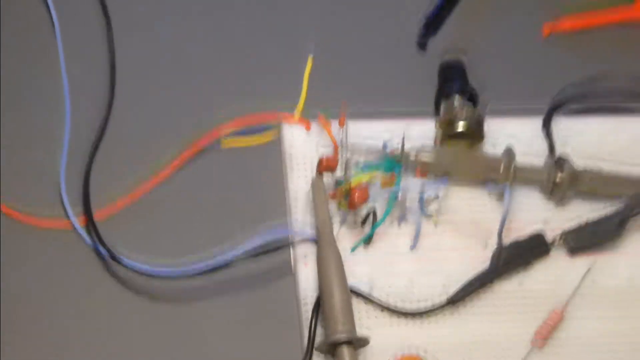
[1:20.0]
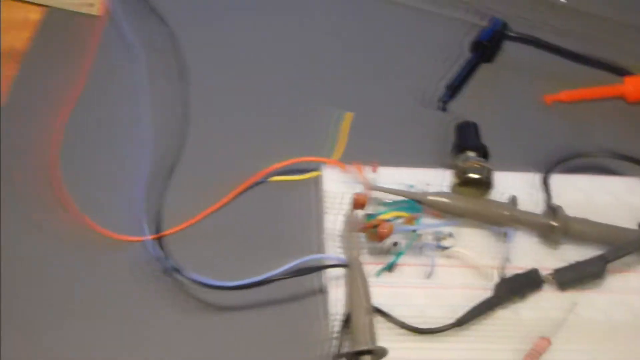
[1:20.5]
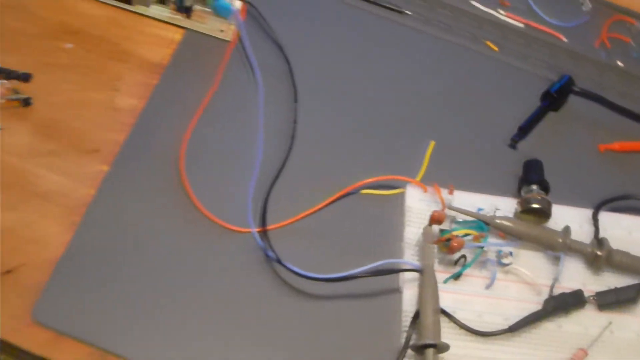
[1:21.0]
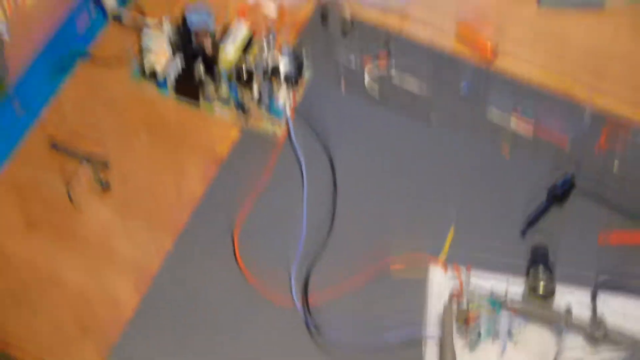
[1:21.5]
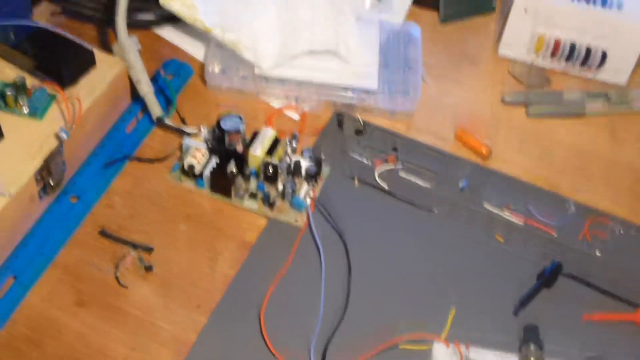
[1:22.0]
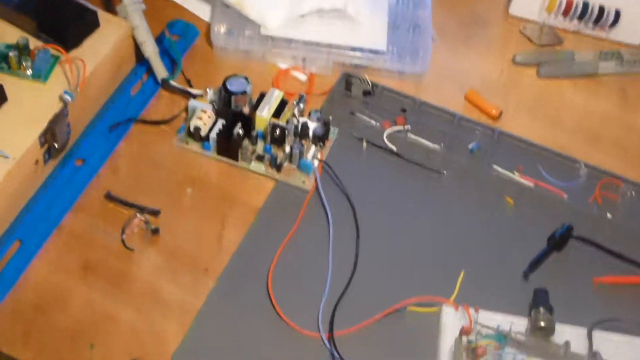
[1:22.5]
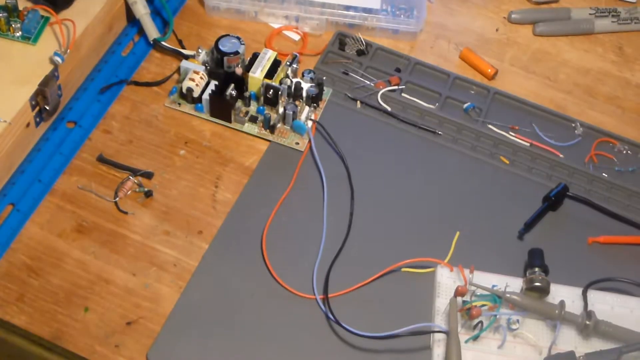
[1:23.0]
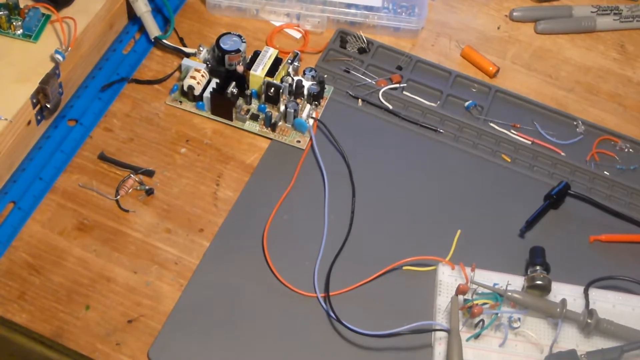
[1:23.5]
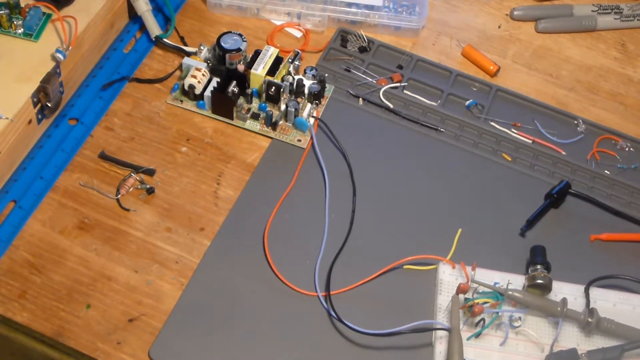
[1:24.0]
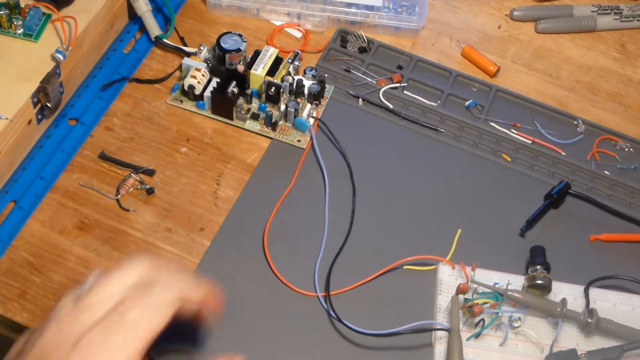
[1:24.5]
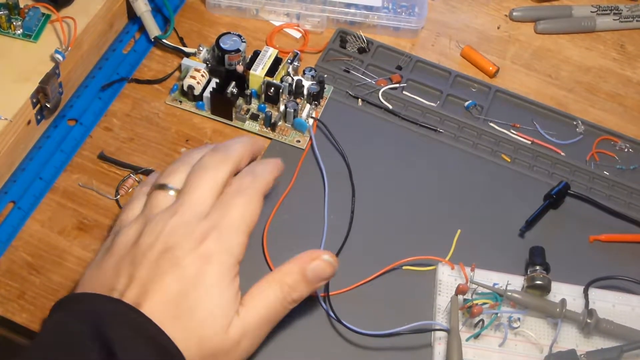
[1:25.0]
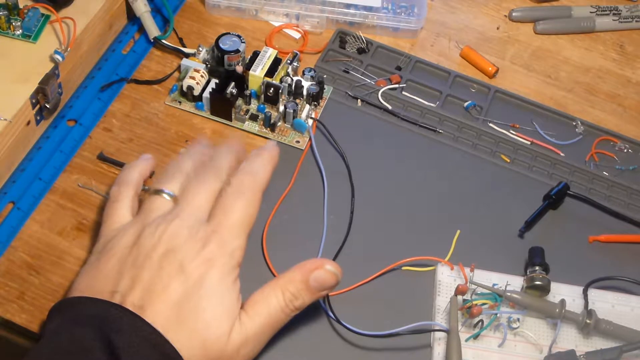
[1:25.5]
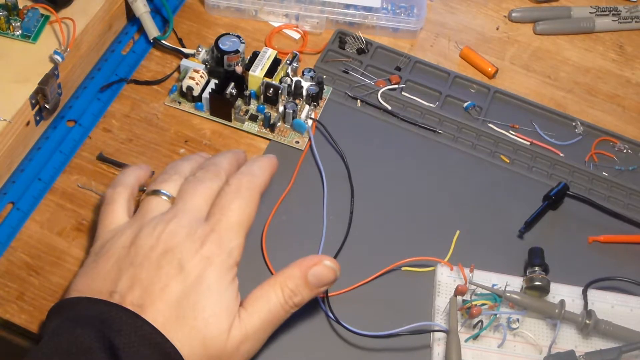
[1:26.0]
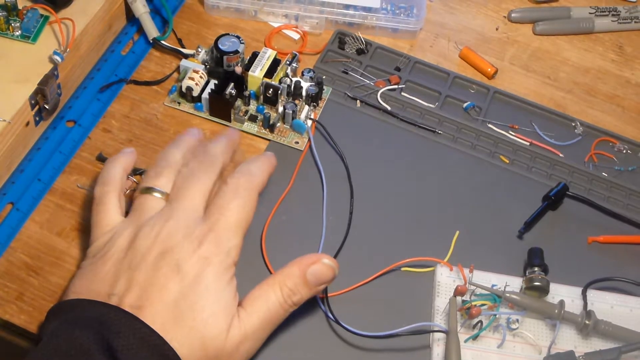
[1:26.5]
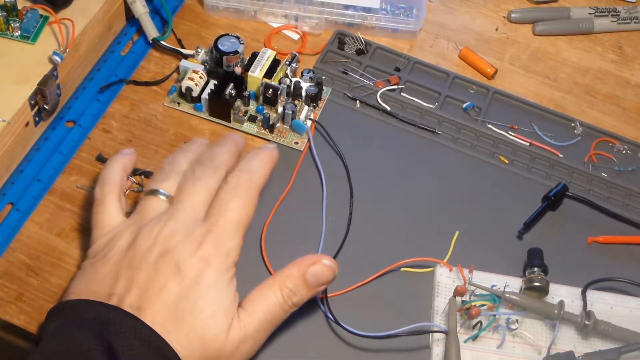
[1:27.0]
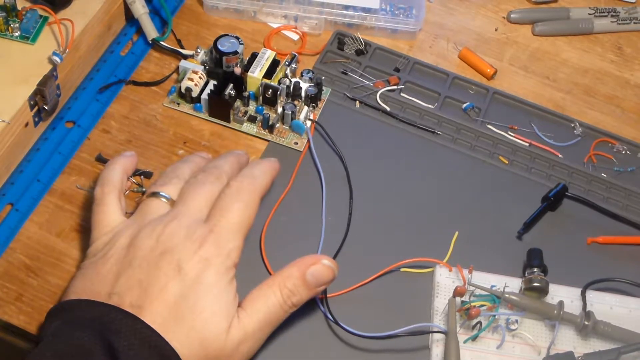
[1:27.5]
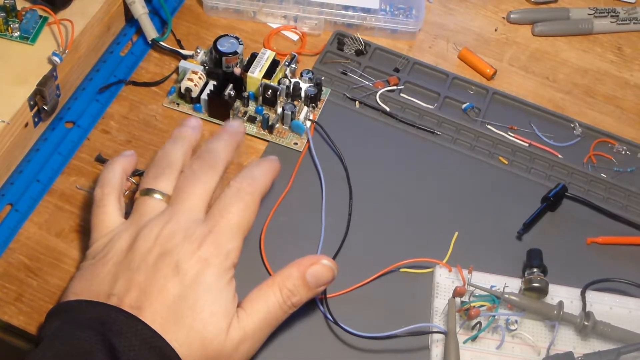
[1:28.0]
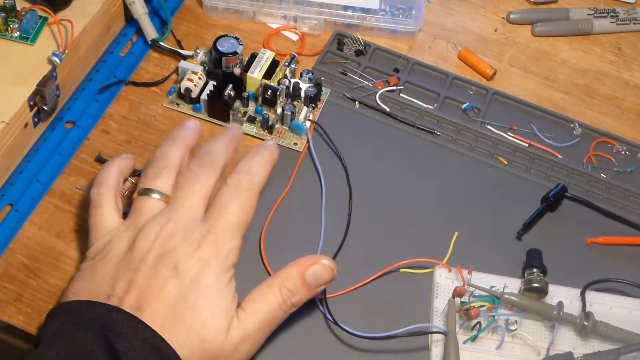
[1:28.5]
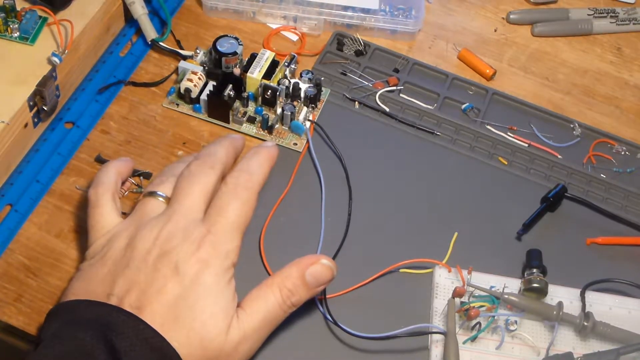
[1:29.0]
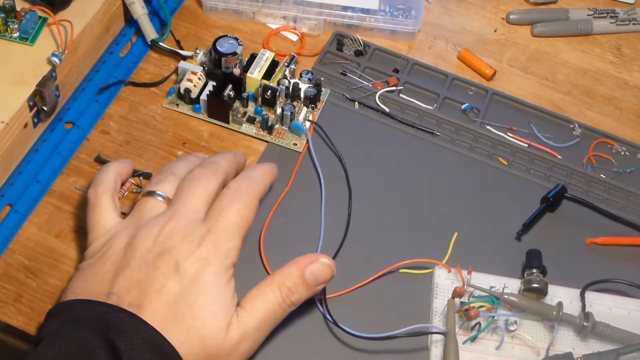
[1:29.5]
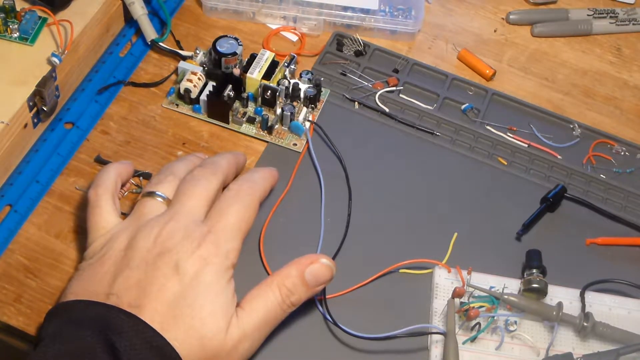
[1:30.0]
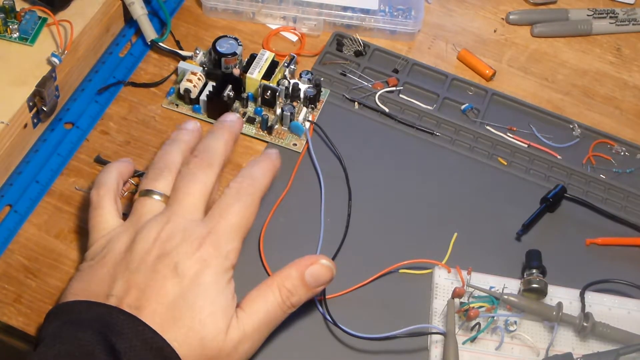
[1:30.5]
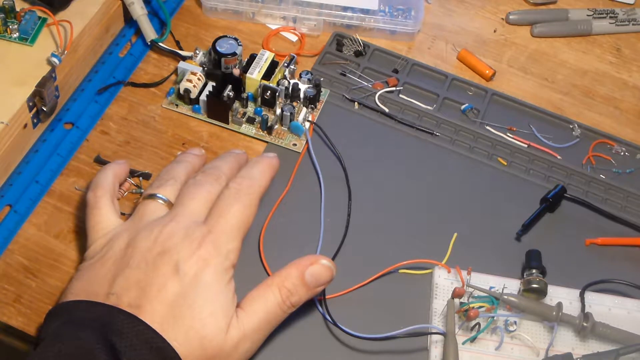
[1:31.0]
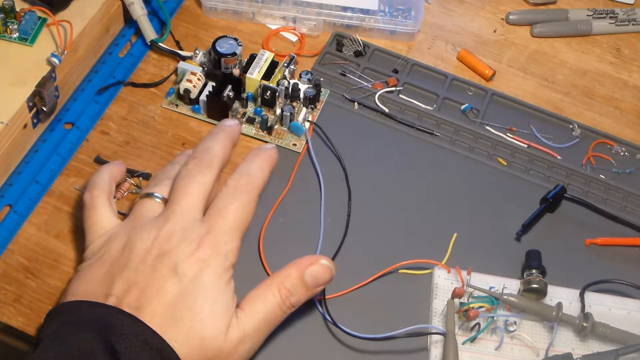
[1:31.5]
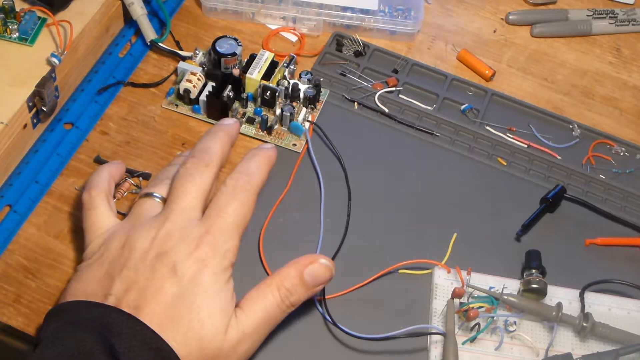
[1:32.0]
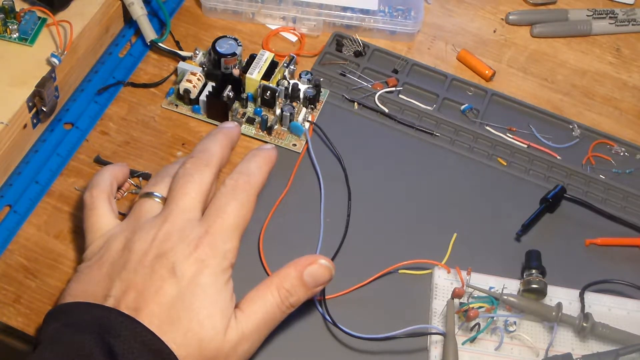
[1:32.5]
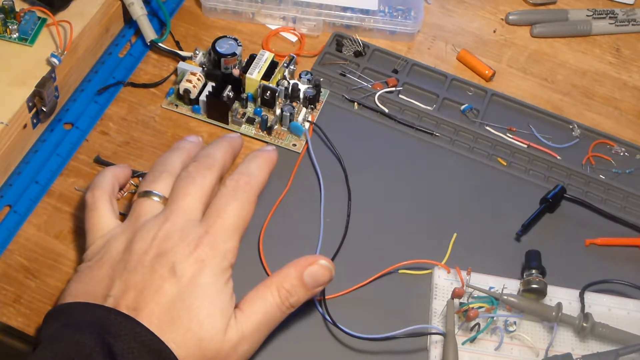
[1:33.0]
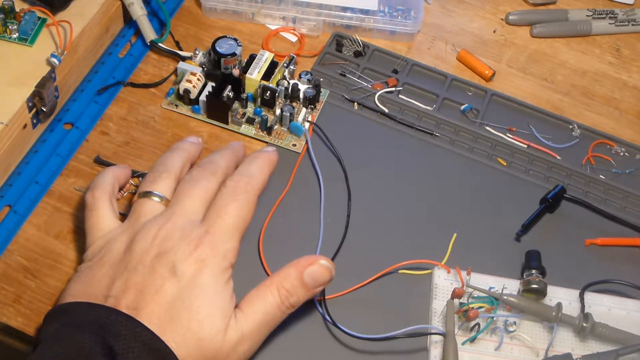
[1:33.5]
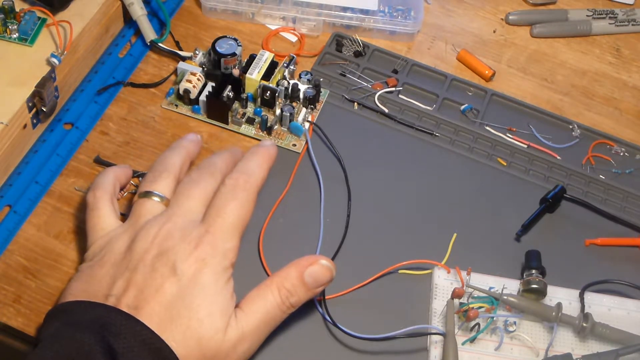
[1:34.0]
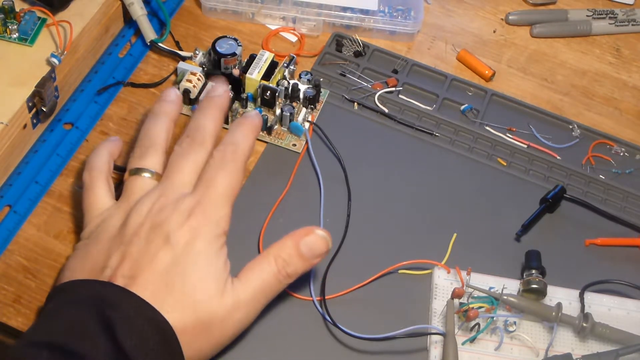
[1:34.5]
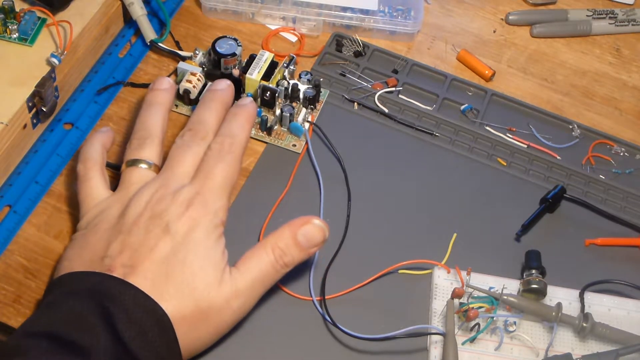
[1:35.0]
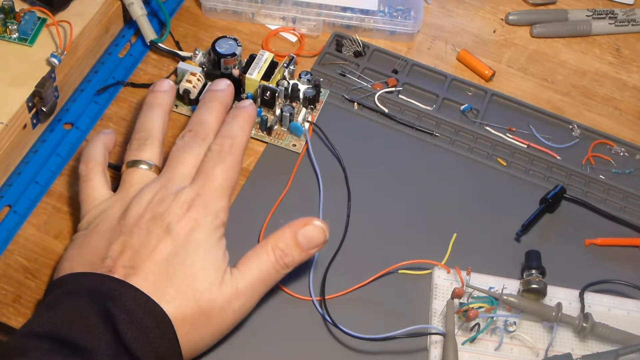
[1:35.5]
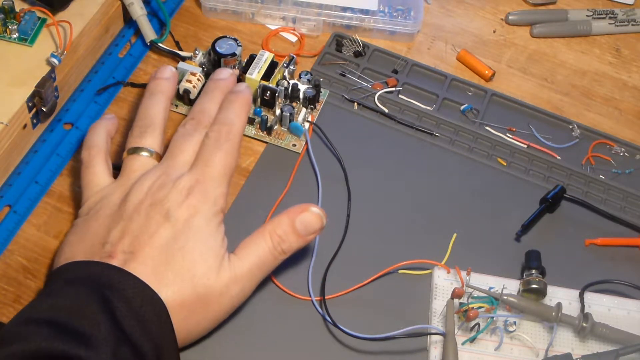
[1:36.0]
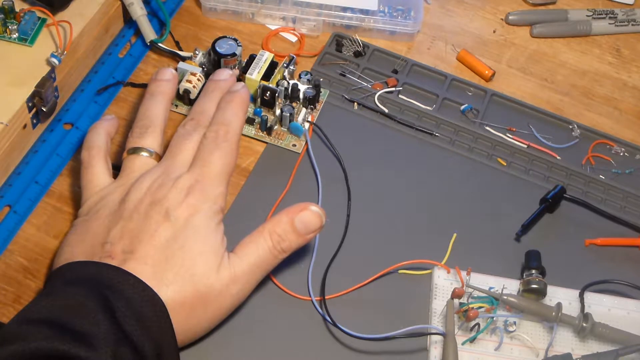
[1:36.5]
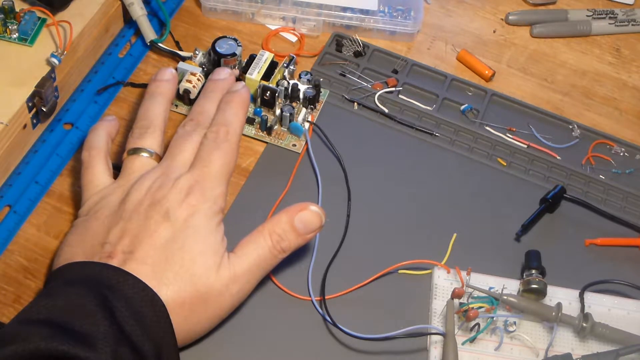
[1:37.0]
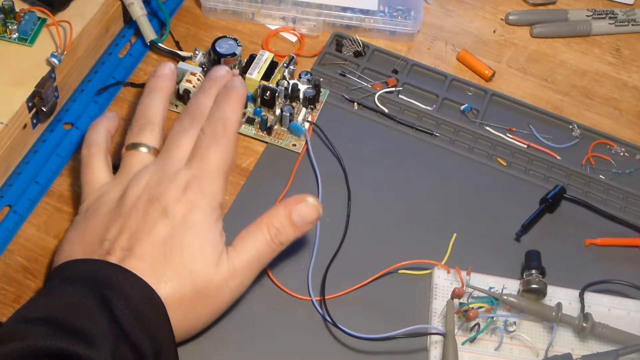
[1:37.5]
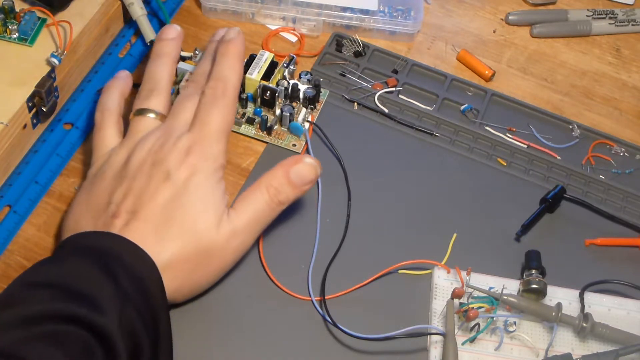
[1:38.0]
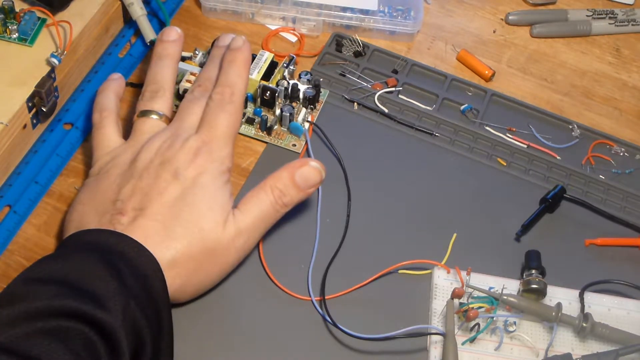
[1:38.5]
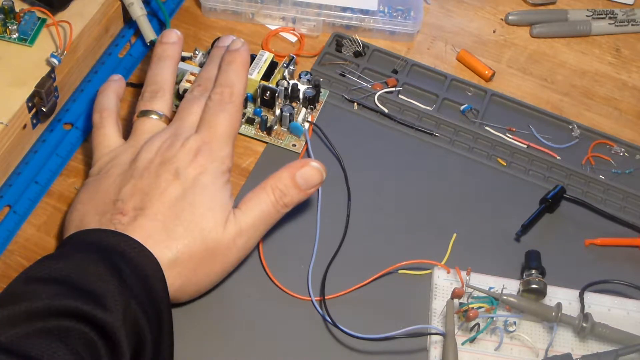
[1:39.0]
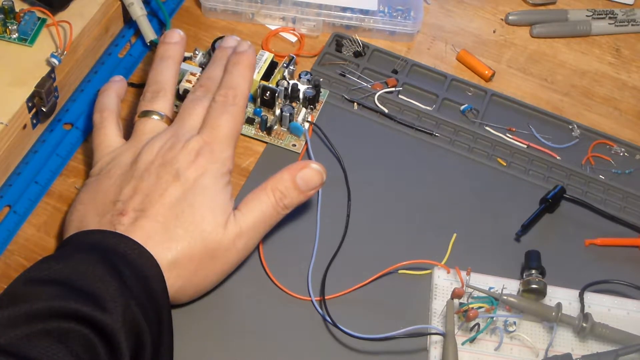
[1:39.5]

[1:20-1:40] A capacitor is attached to a board tester, and wires run from that board to another electronic board covered with various conductors or semiconductors and other parts. This main board is at the top left of the screen, and the white test board is at the bottom right, with electronic components such as capacitors attached to it. A few wires connect the two devices. It appears the orange capacitors are possibly being tested as a possible fix for the main board.